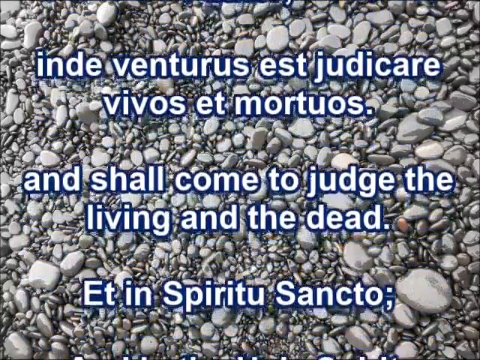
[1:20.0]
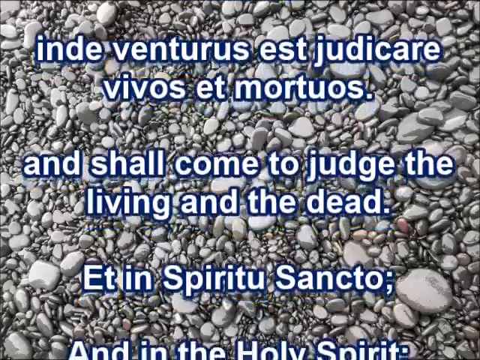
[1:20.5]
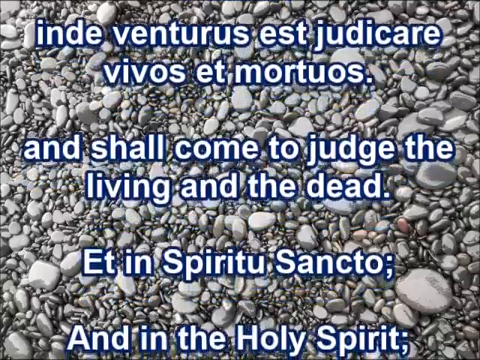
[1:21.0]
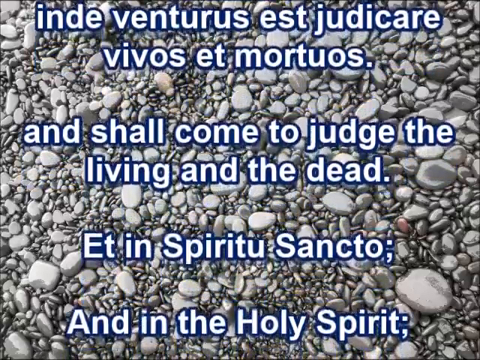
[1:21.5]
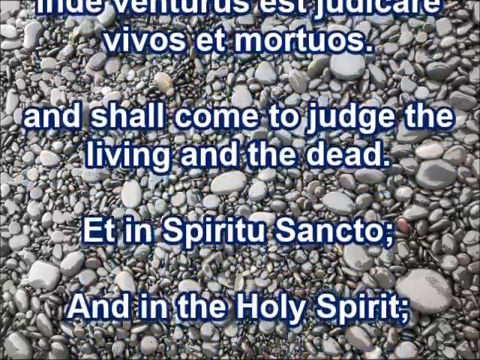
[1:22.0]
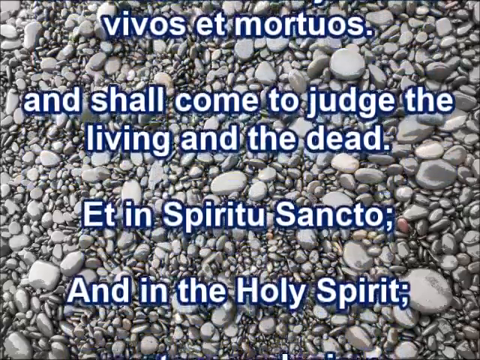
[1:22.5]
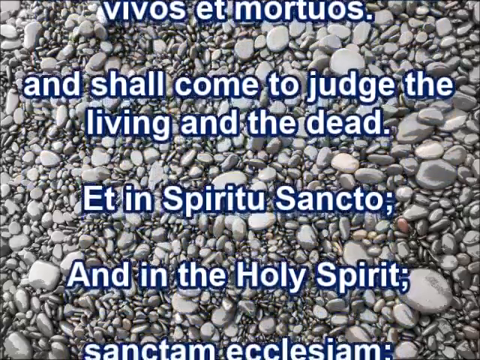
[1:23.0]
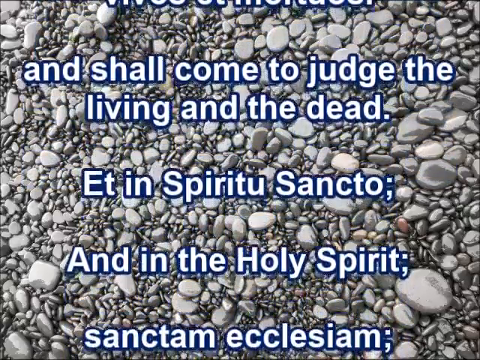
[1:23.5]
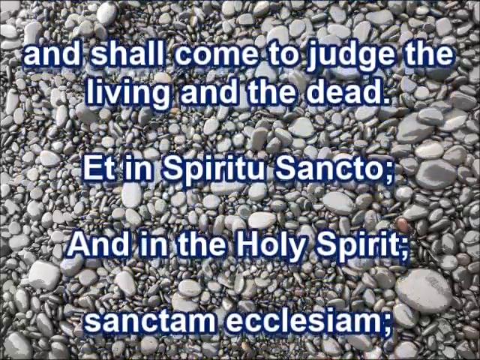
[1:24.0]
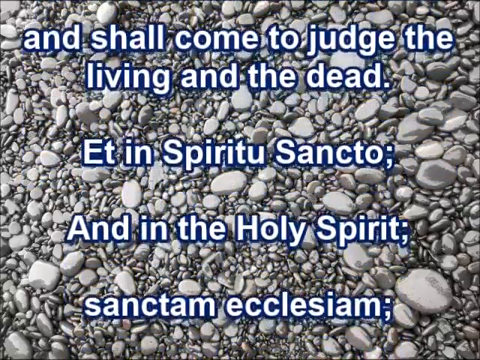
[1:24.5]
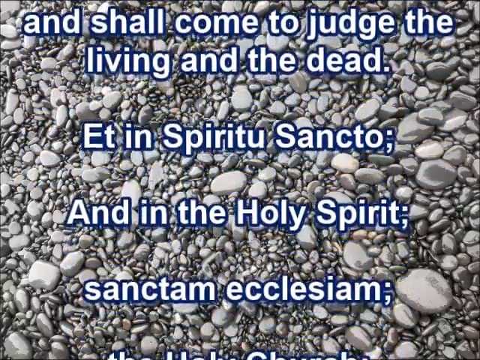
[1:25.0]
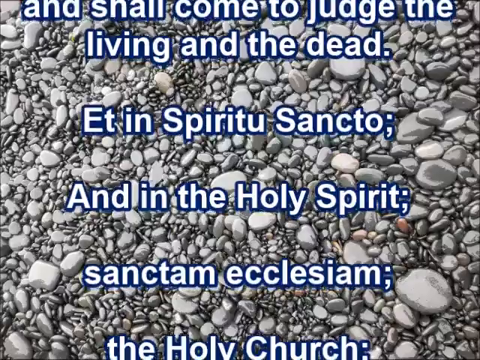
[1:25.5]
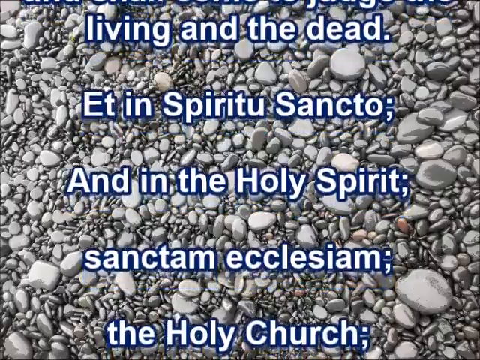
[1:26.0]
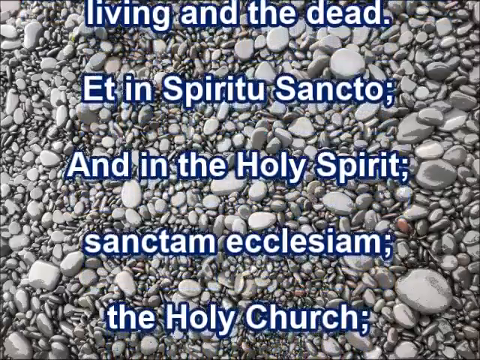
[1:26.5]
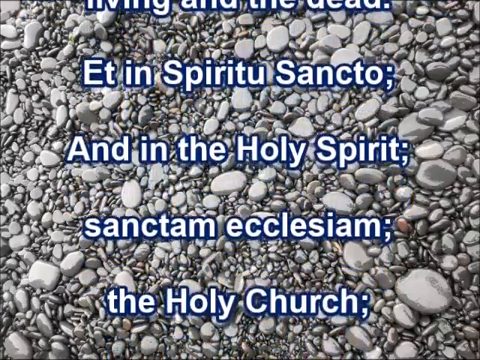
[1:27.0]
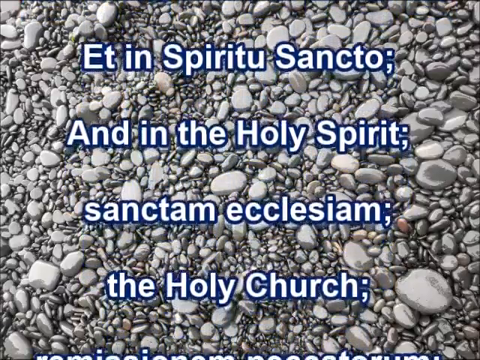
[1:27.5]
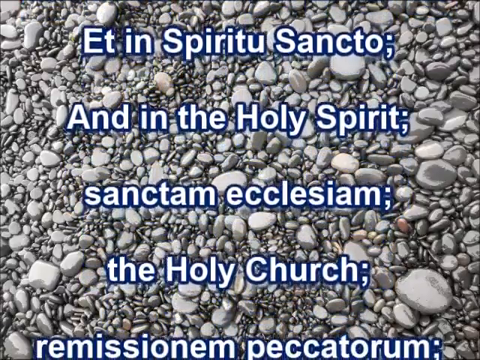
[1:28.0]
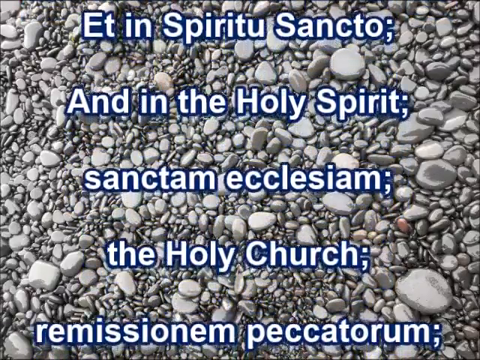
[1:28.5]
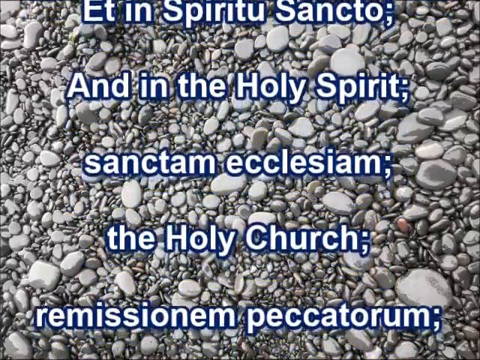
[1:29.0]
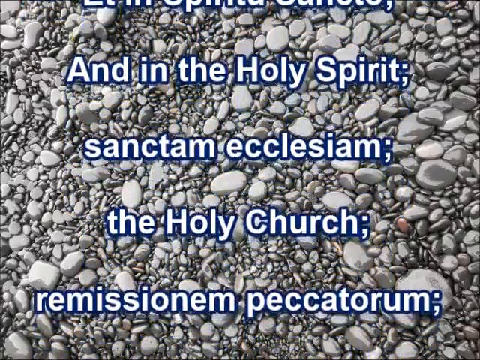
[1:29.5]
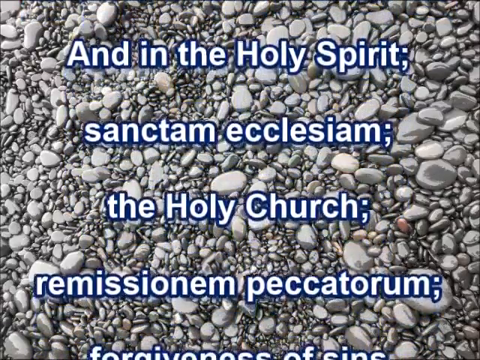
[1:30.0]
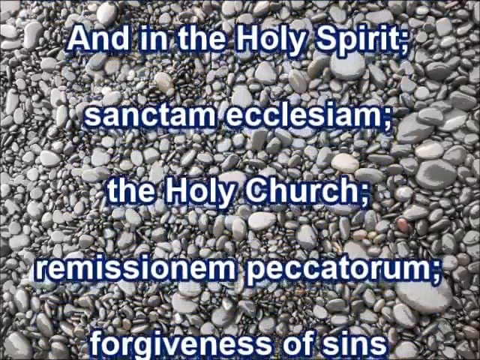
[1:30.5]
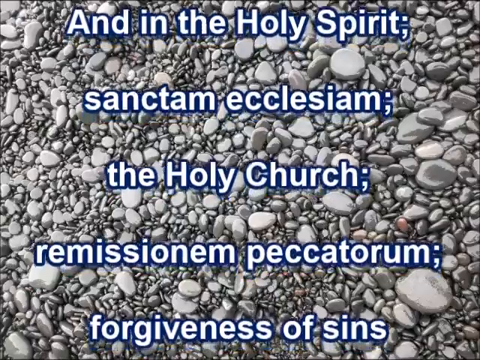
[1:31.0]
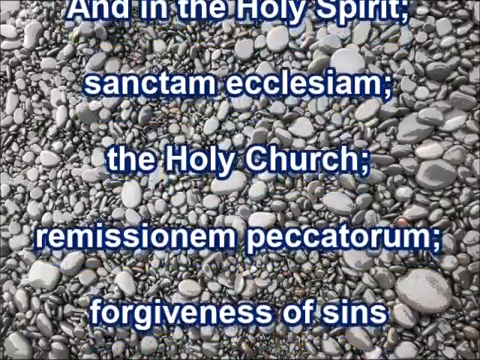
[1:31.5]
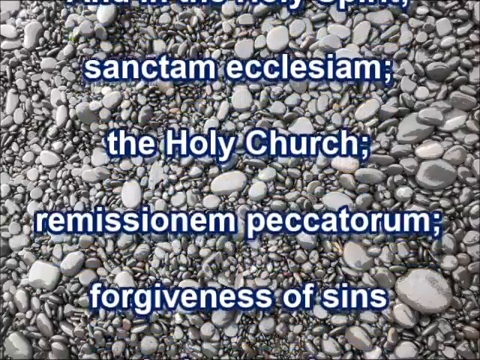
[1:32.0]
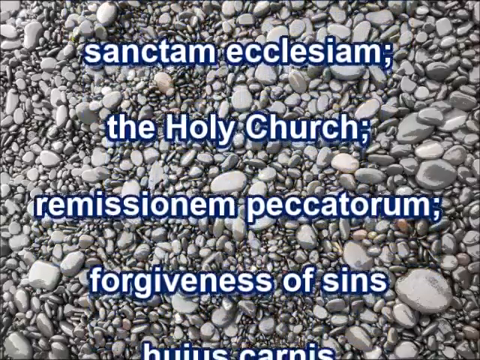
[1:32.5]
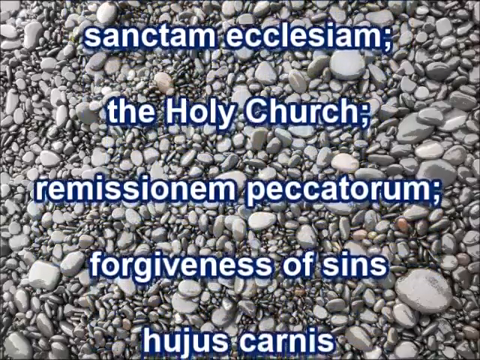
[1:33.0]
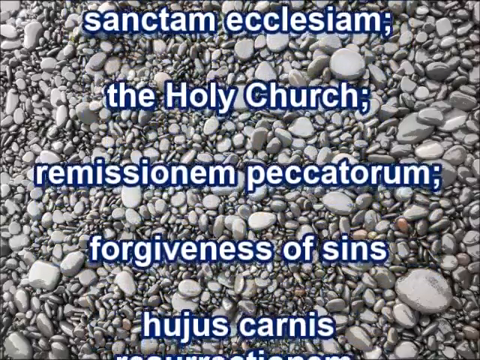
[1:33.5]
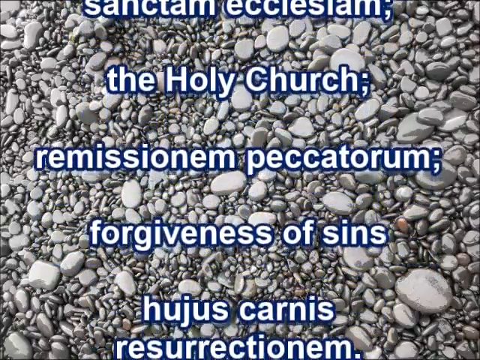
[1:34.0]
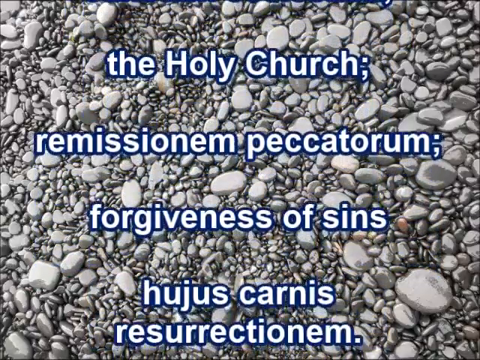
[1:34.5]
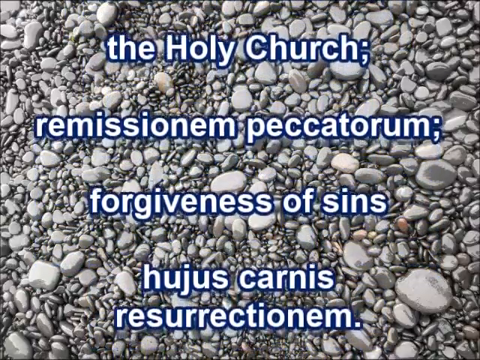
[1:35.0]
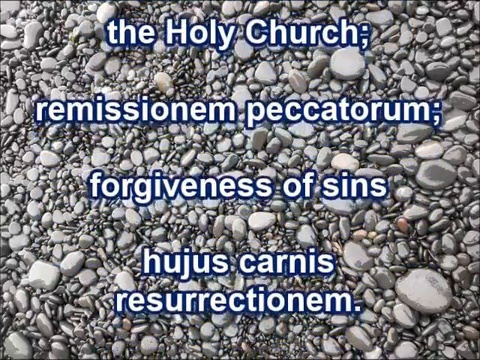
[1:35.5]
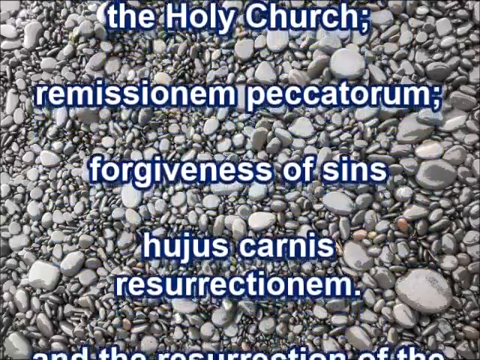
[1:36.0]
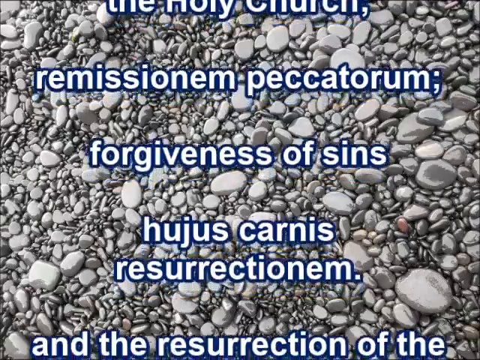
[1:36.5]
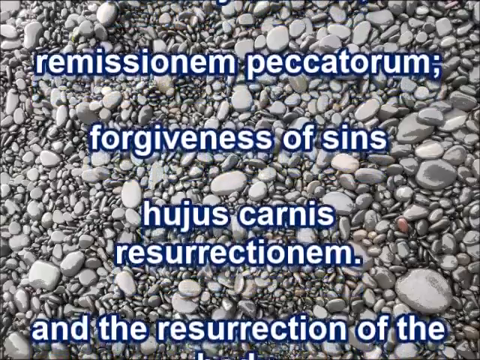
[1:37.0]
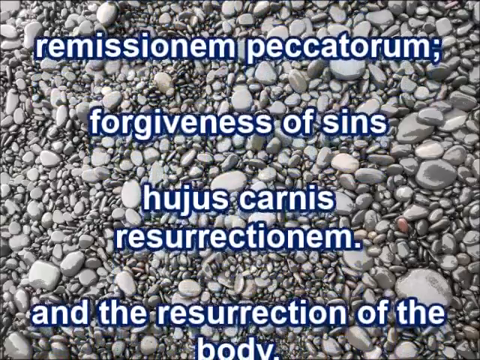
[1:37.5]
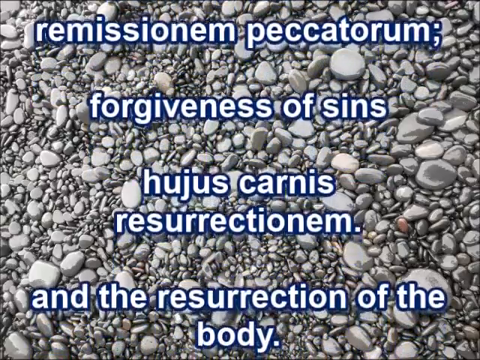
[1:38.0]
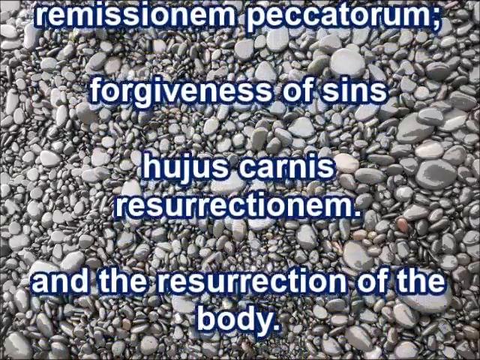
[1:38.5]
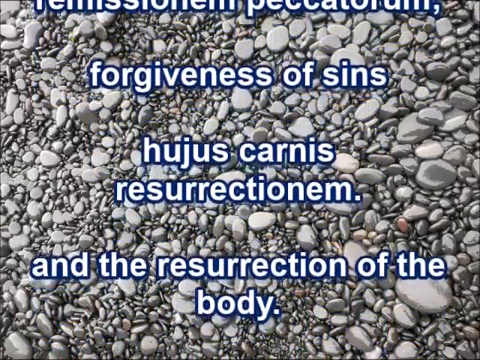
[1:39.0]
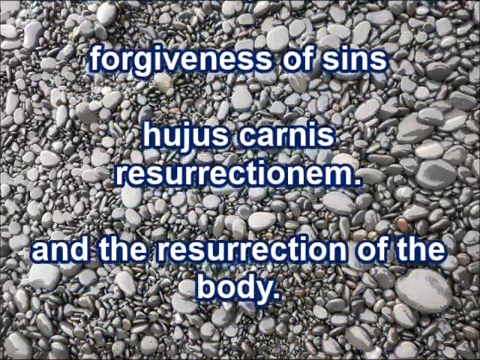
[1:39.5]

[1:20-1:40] The camera faces downward at the ground, where many small pebbles and stones are scattered throughout and stacked on top of one another. They range from small pebbles to larger stones, in colors from white and light gray to dark gray. In the center of the screen, Spanish words are intermixed with English translations, all written in white with a dark blue border. The English words first read "and shall come to judge the living and the dead", then "and in the Holy Spirit, the Holy Church", then "forgiveness of sins, resurrection, and the resurrection of the body". The words start at the bottom of the screen and work their way upward.